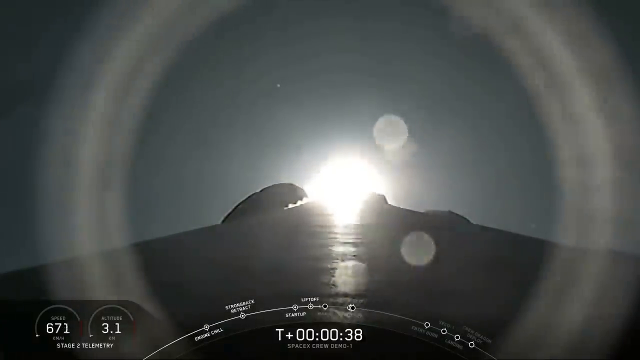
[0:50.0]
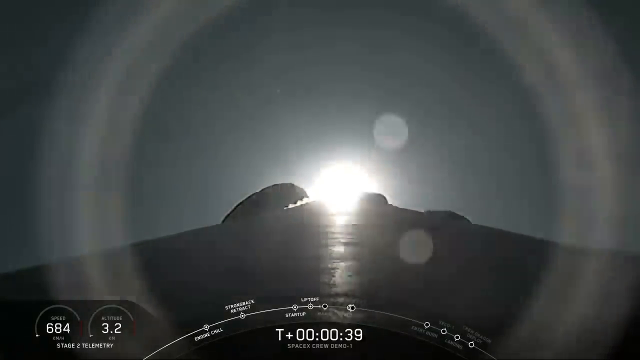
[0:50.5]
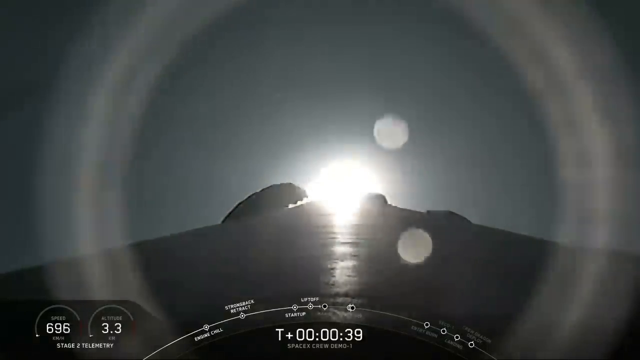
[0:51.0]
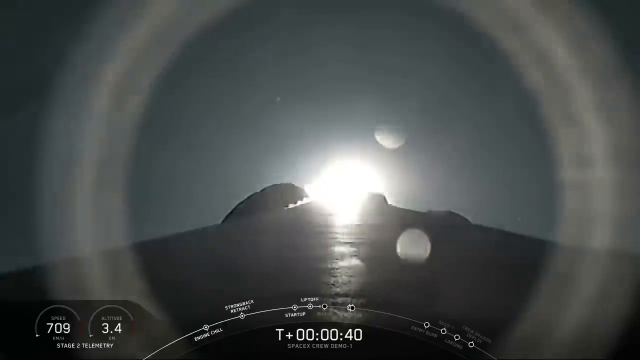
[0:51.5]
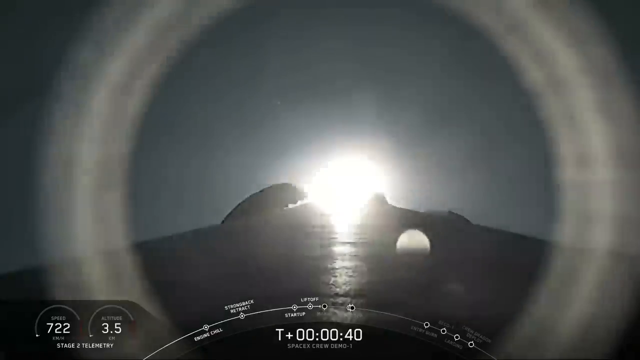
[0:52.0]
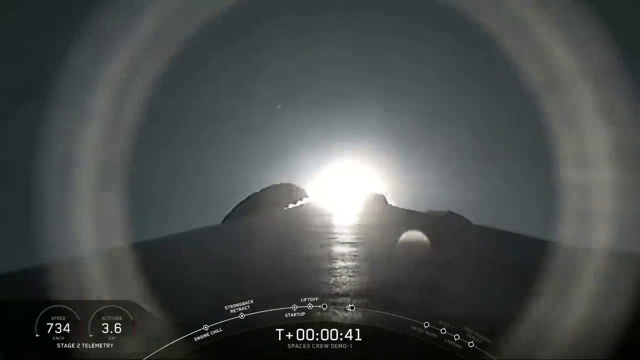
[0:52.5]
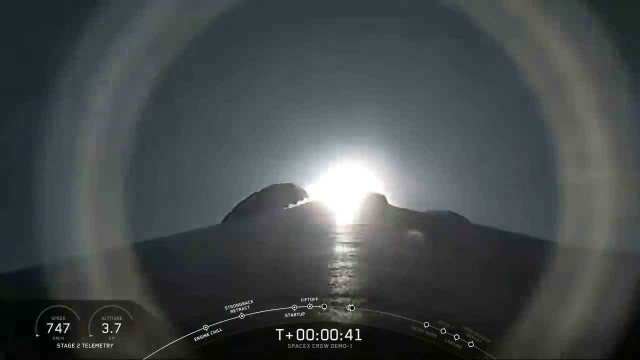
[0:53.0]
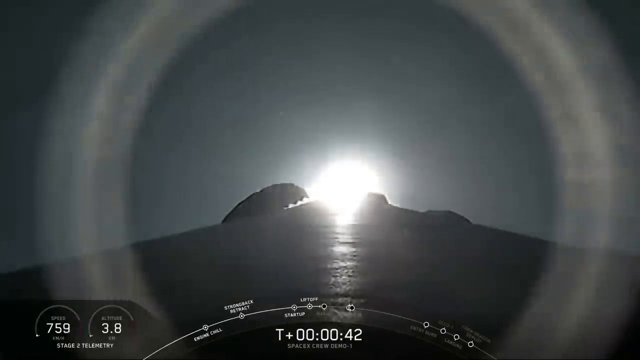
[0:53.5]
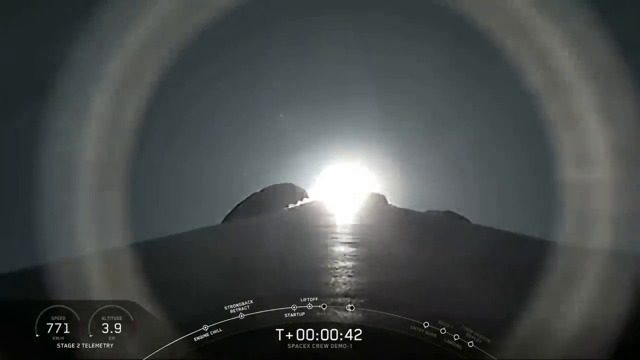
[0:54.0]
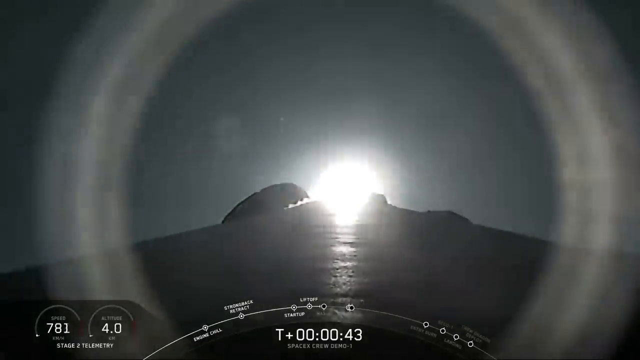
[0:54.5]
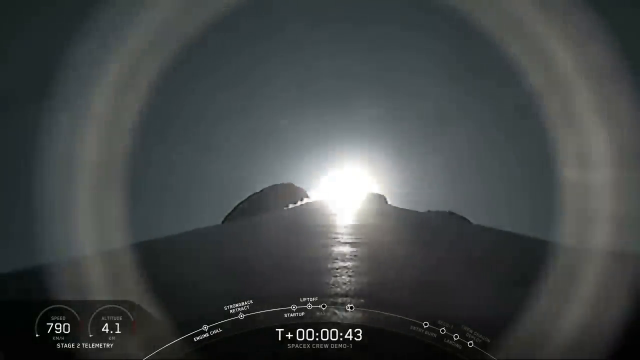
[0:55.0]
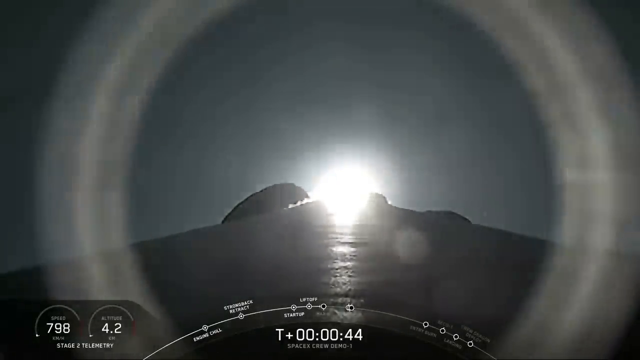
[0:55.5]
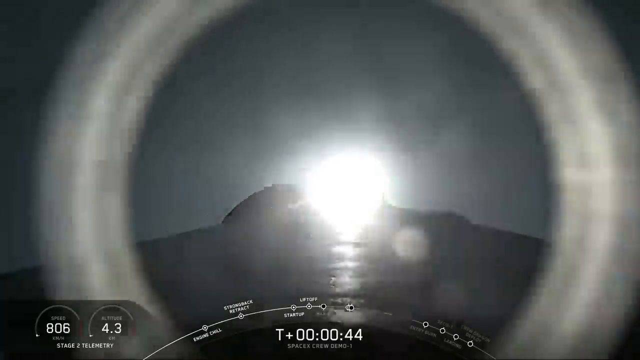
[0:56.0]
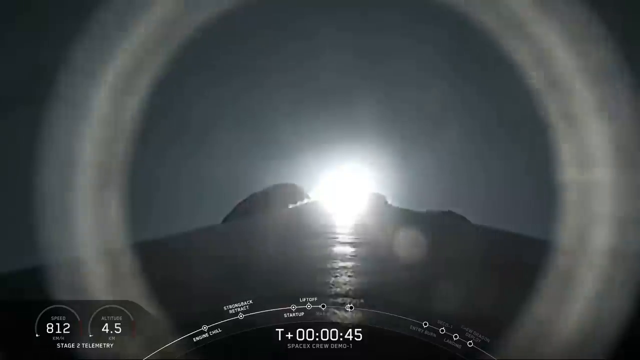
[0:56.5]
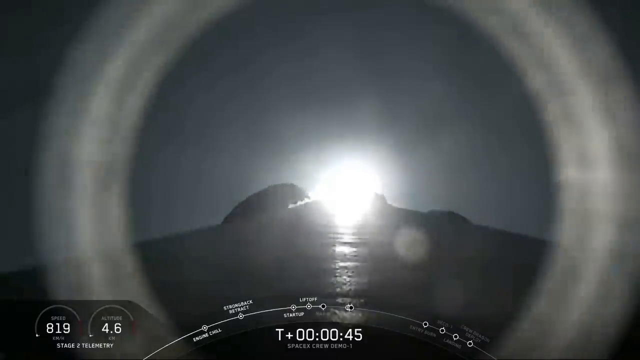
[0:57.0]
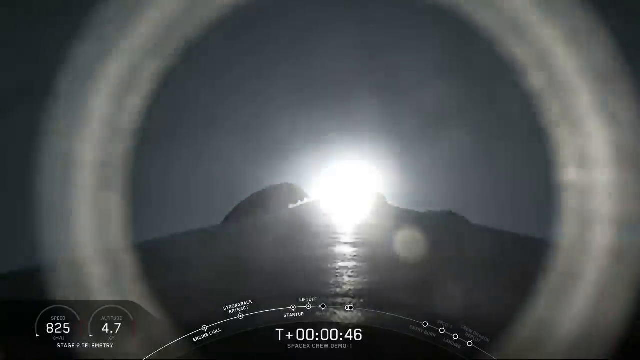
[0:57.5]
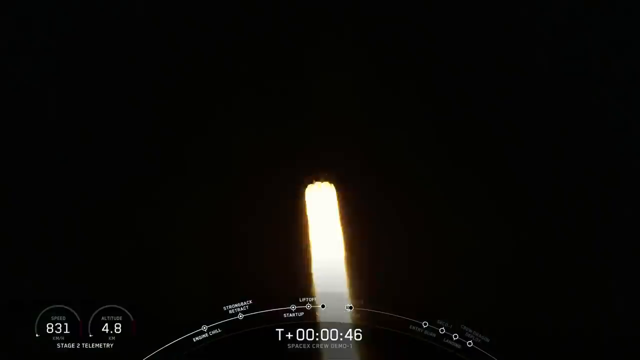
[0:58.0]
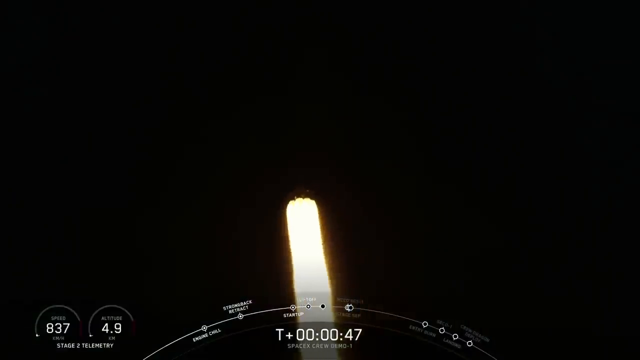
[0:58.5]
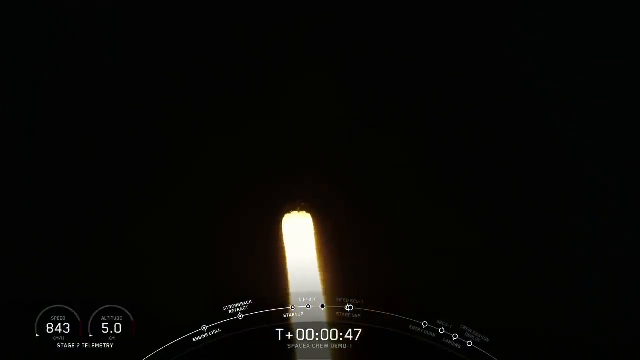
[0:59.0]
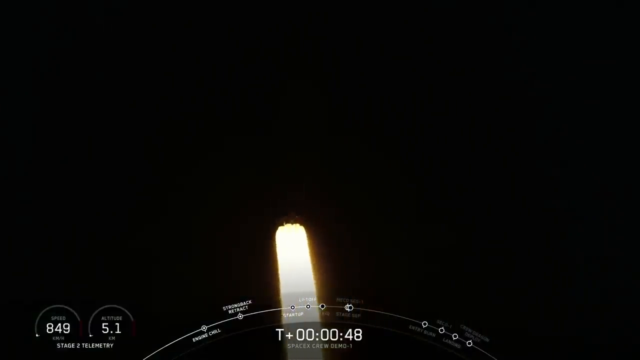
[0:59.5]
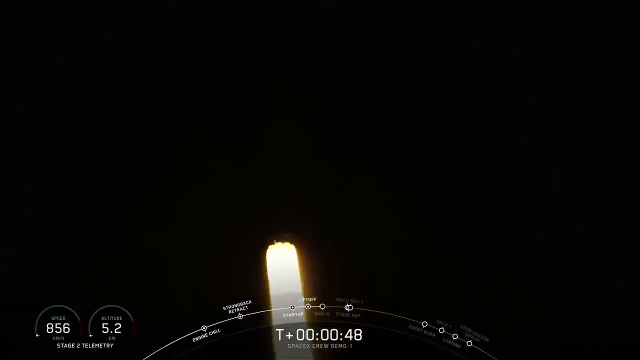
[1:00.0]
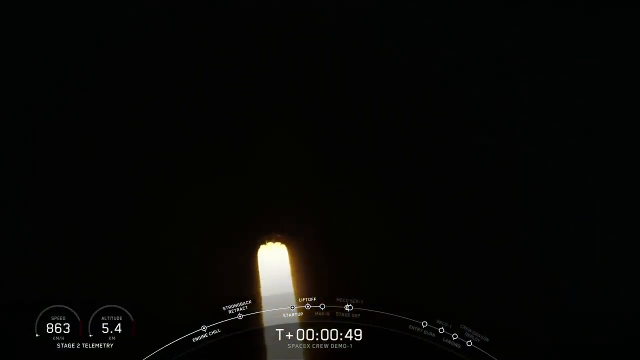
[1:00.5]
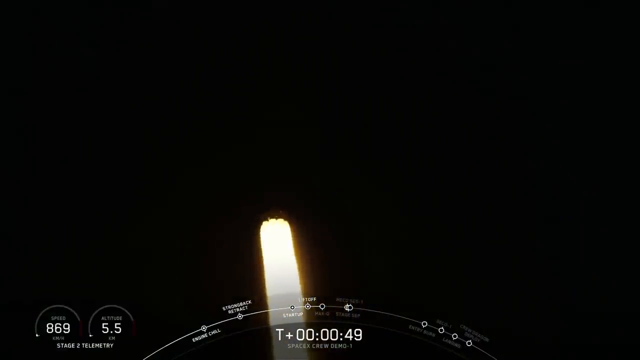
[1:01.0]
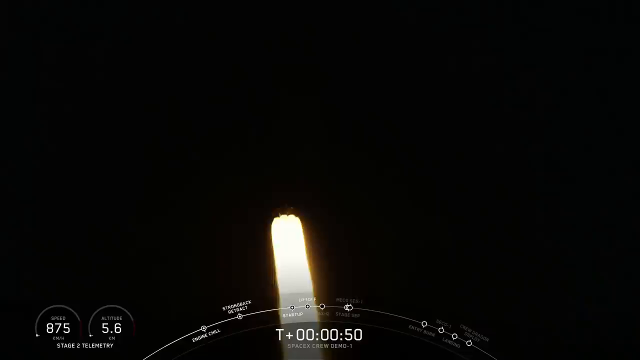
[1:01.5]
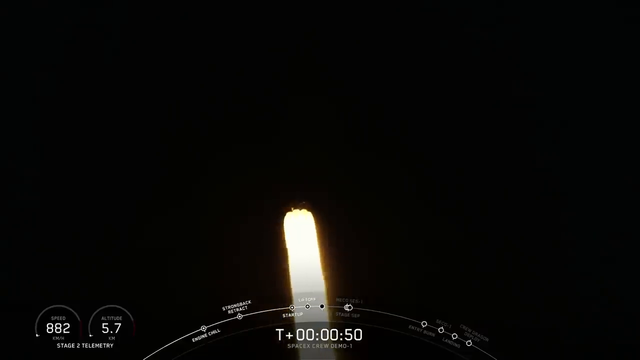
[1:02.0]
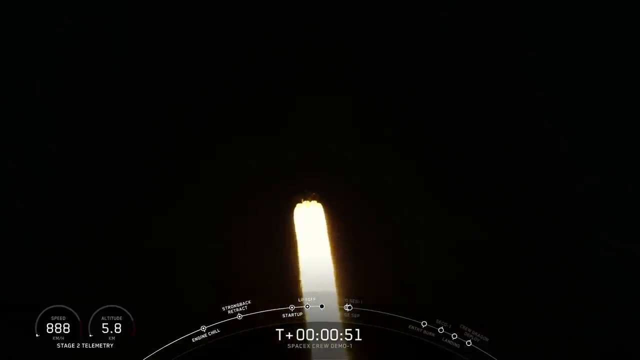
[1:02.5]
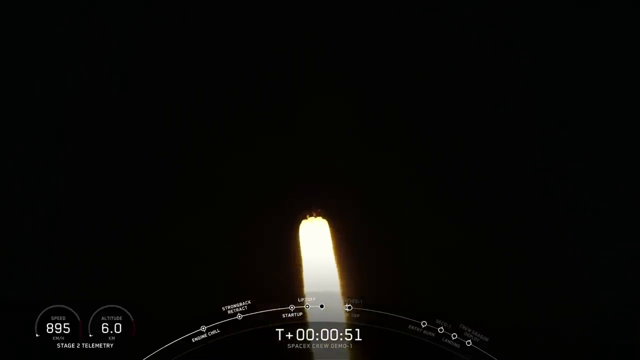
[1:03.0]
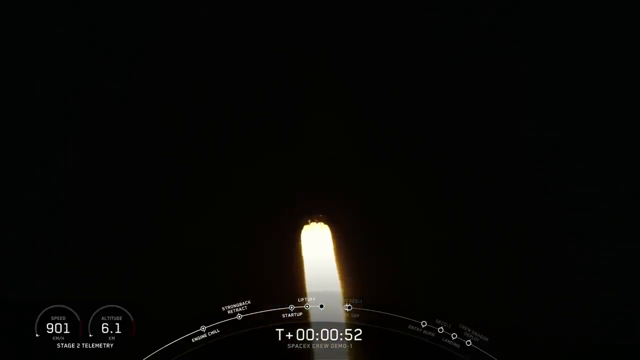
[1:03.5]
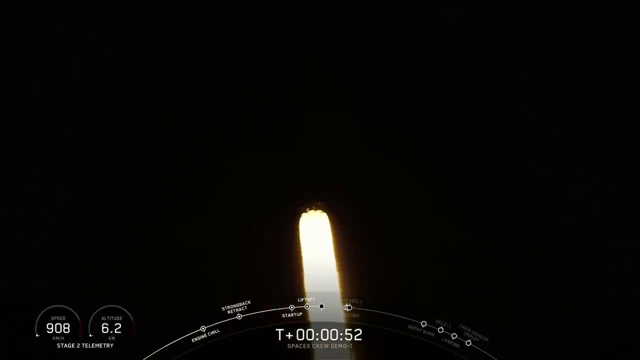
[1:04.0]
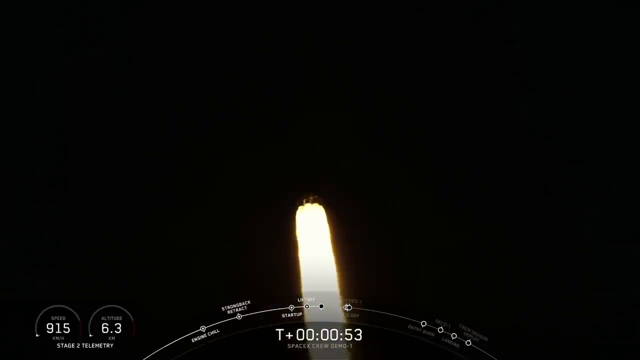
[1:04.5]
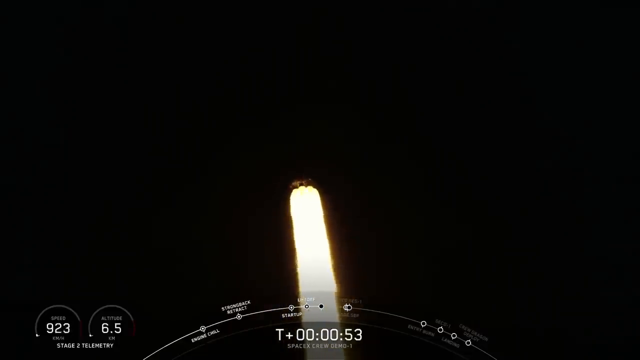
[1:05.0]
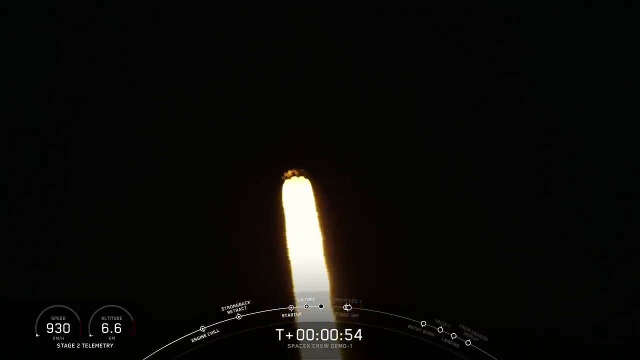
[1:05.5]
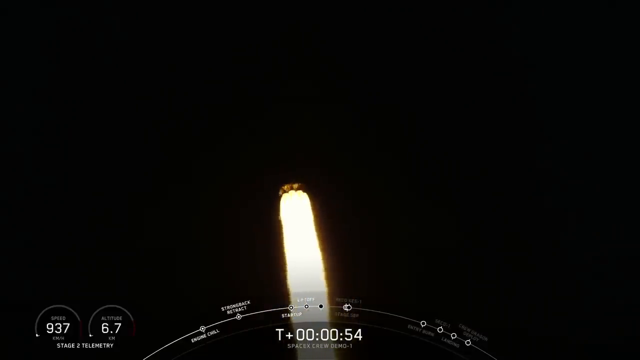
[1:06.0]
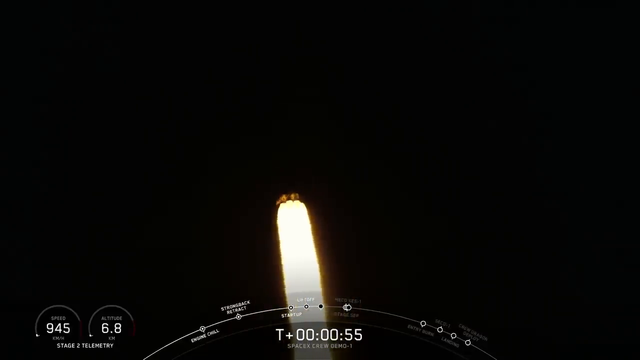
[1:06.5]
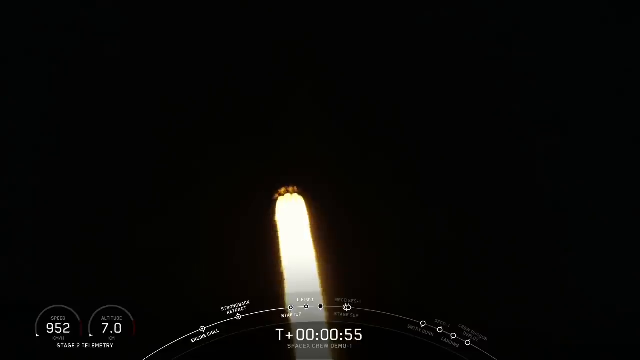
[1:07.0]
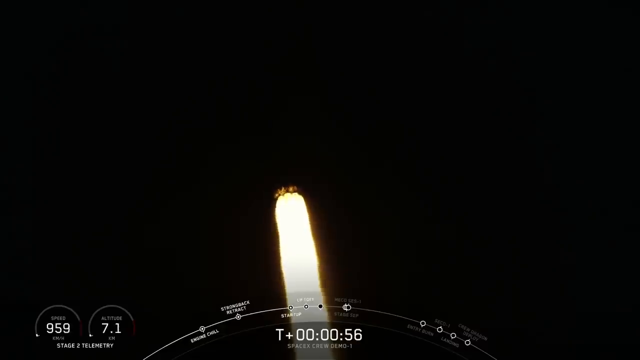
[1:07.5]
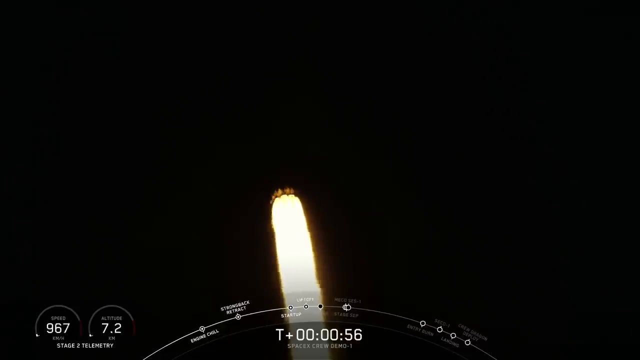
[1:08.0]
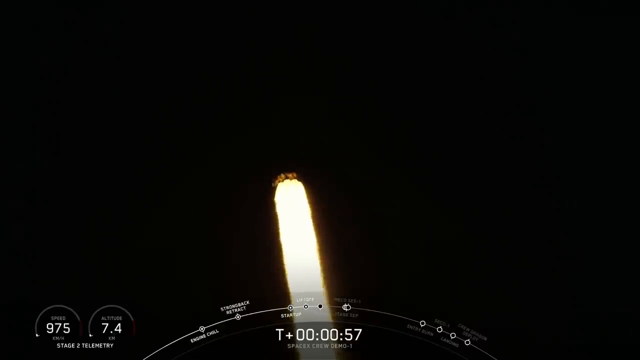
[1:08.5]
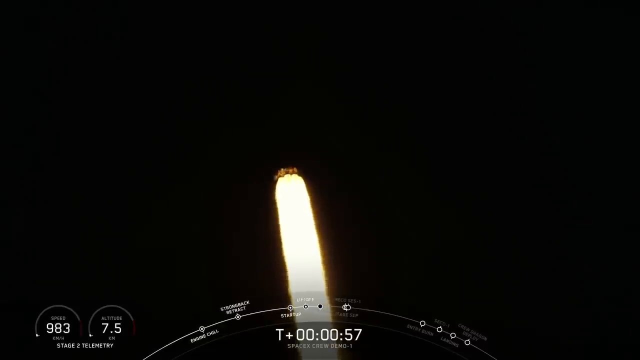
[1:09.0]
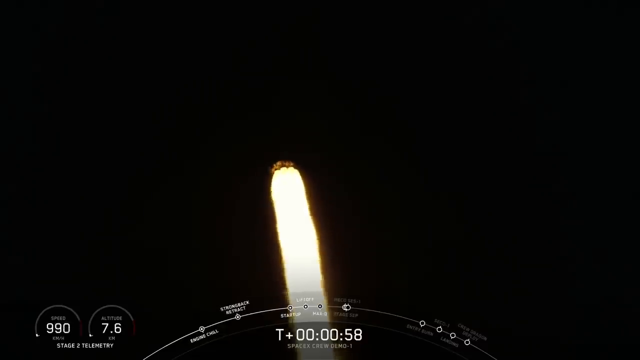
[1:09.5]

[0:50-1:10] The onboard view continues looking down the side of the rocket at the glow from the fire at its bottom as the timer progresses past 40 seconds. A halo-type effect creates a circular halo on the left and right sides of the screen, with the base of the rocket and the fiery glow in the middle of it. The speed and altitude gauges in the bottom left increase to over 800 kilometers per hour and an altitude of 5 kilometers. The video then cuts to a view from Earth zoomed in on the rocket, where the rocket itself is barely illuminated and mostly the fire shooting from its bottom is visible. The graphics remain on screen and keep changing as the rocket gains speed, the time increases and the altitude rises.